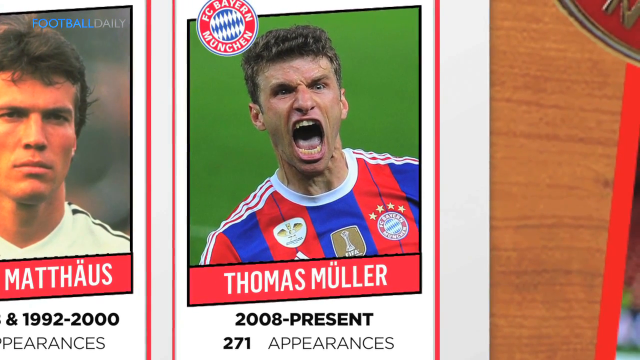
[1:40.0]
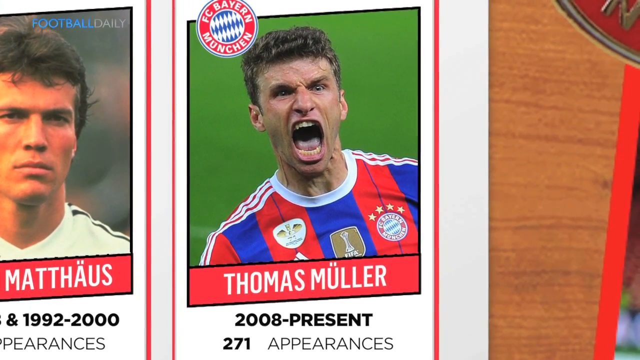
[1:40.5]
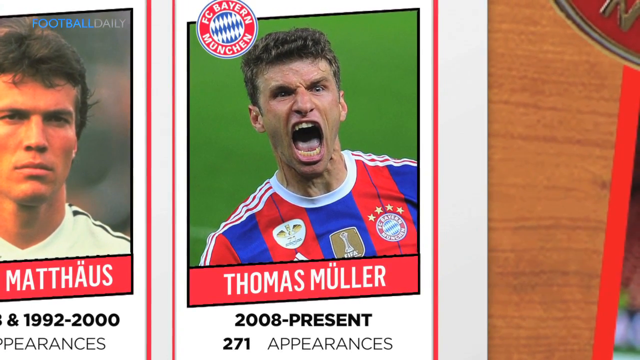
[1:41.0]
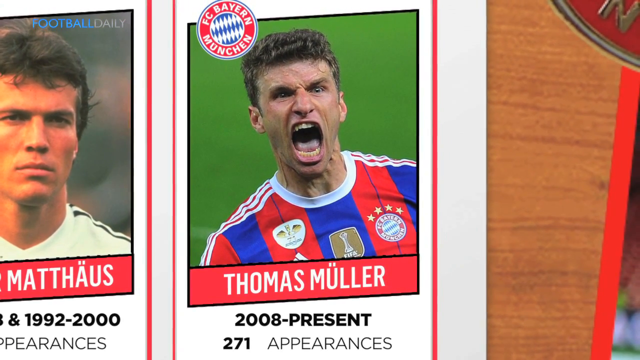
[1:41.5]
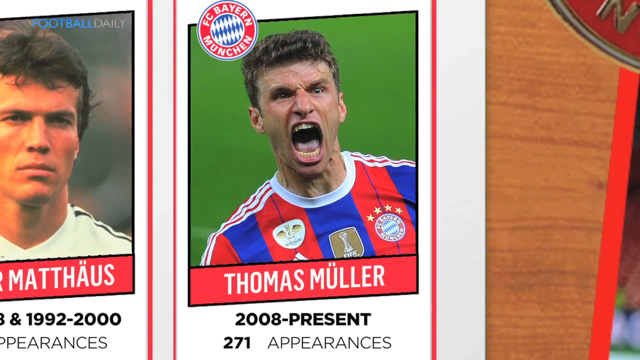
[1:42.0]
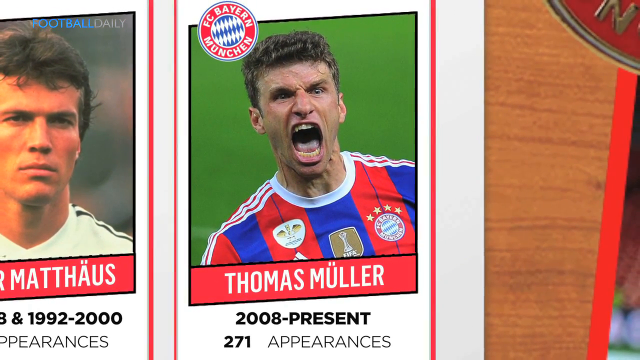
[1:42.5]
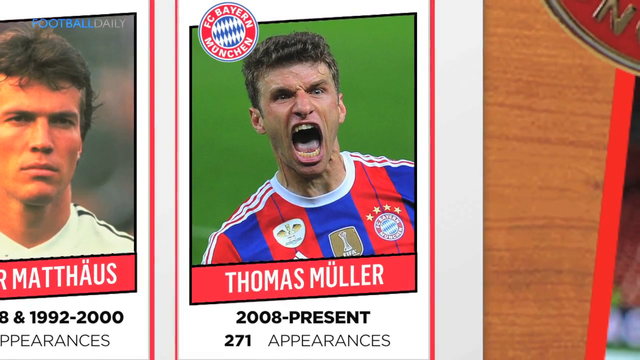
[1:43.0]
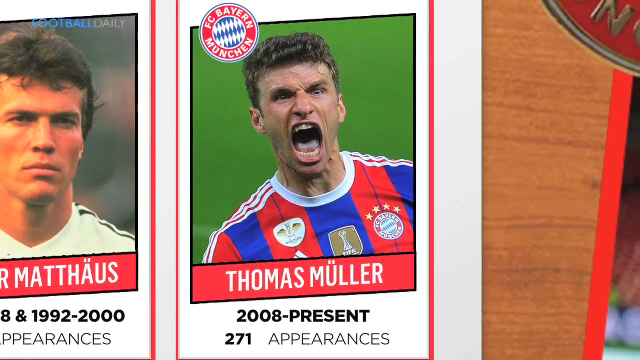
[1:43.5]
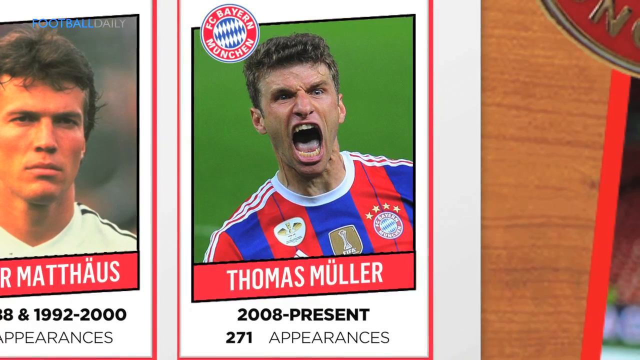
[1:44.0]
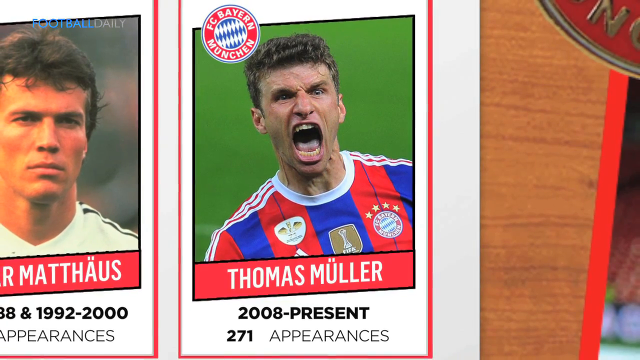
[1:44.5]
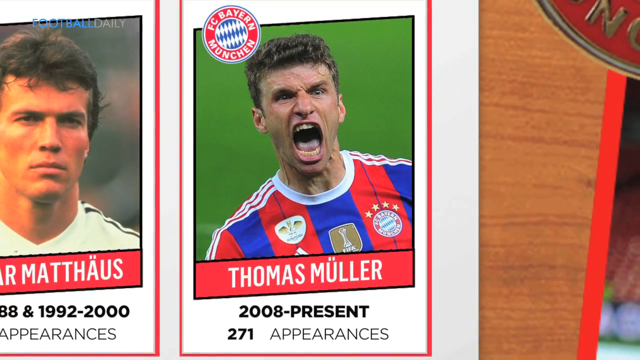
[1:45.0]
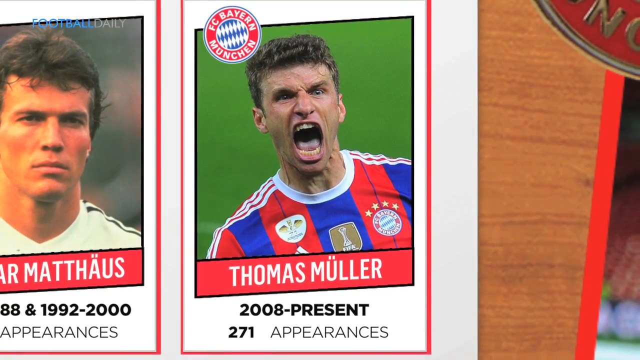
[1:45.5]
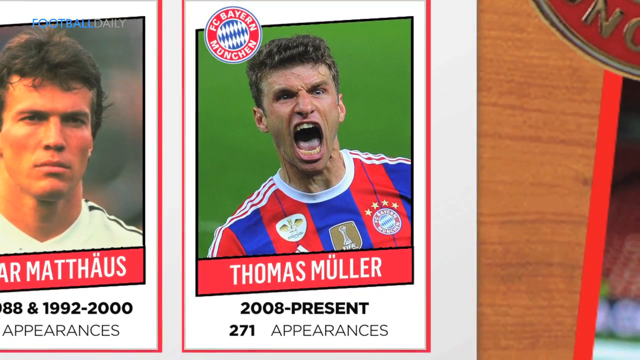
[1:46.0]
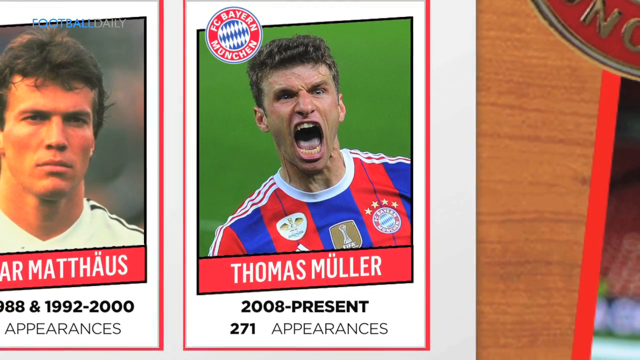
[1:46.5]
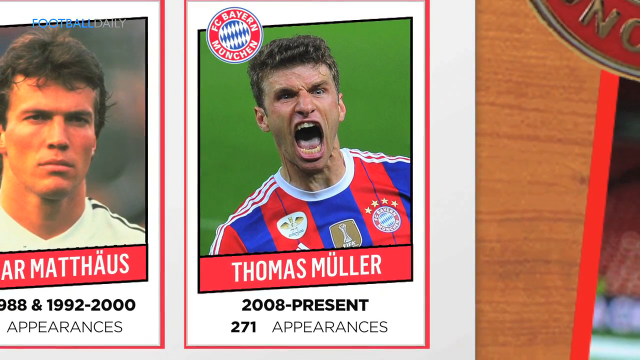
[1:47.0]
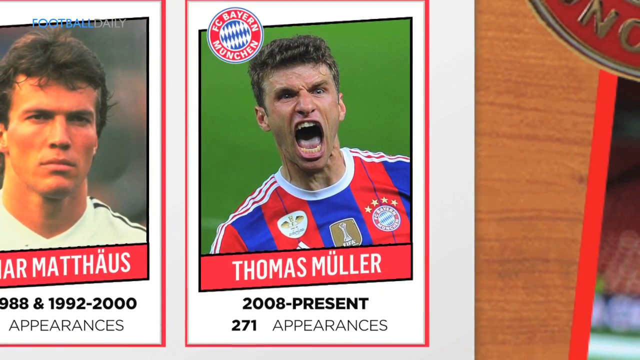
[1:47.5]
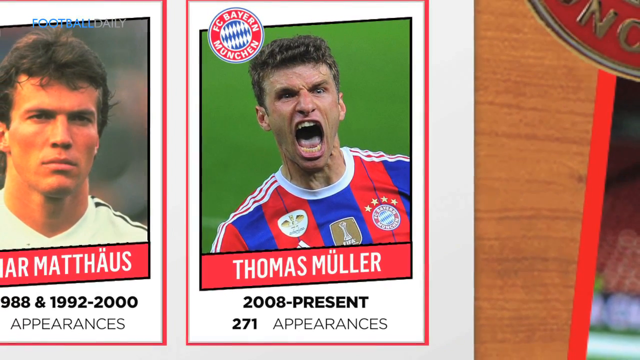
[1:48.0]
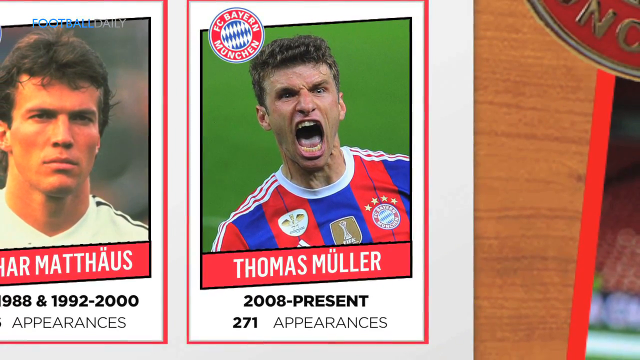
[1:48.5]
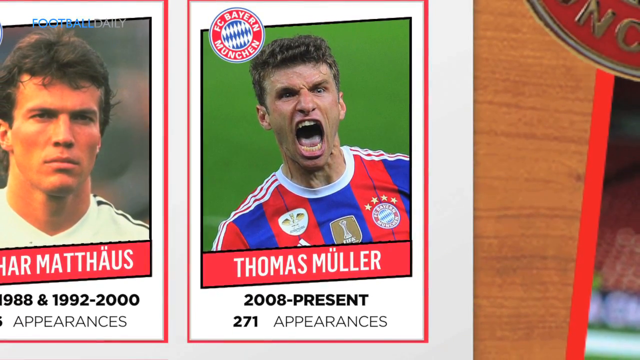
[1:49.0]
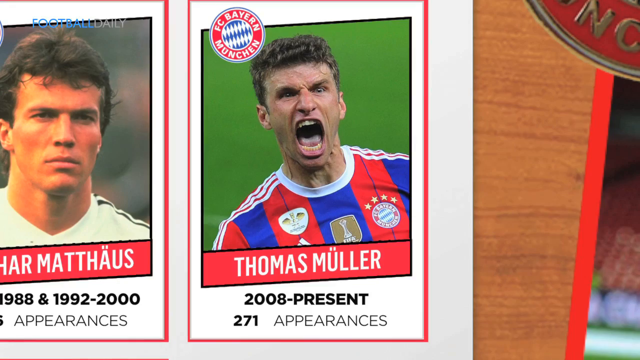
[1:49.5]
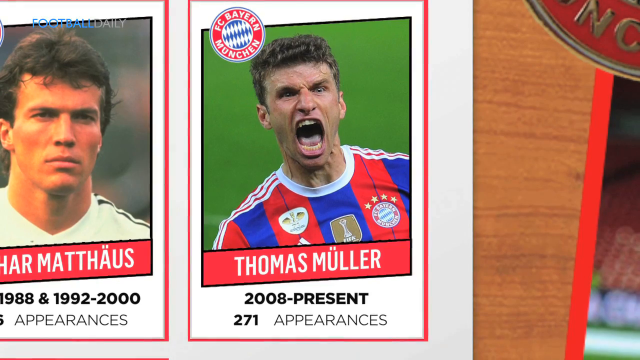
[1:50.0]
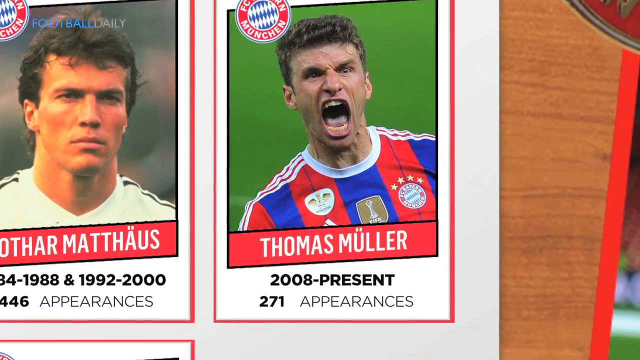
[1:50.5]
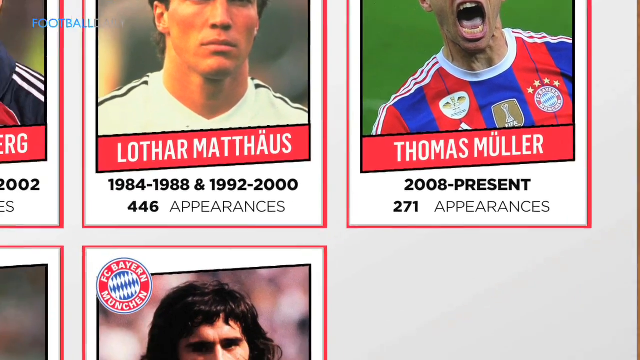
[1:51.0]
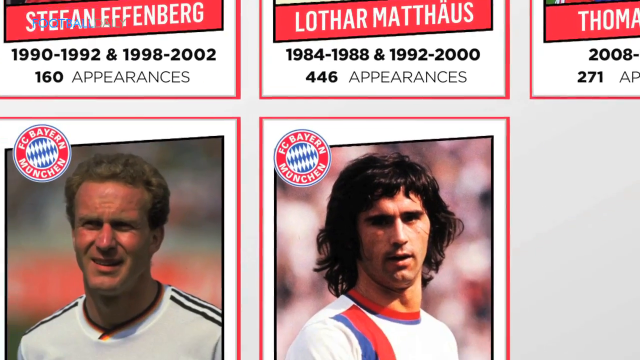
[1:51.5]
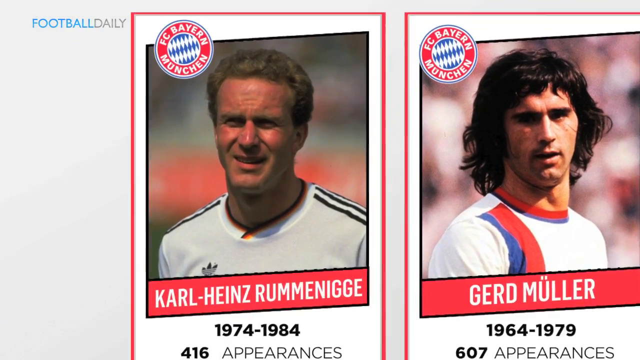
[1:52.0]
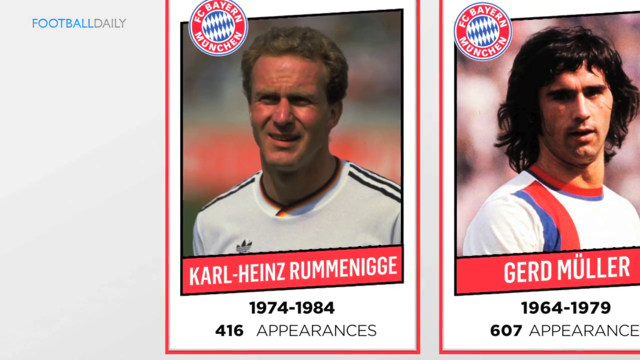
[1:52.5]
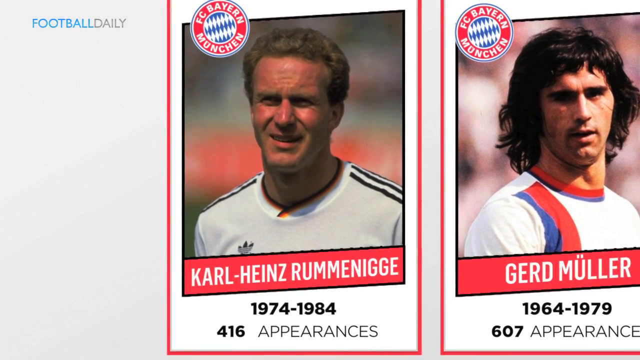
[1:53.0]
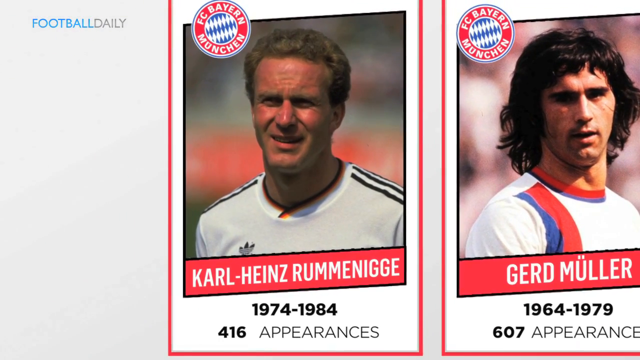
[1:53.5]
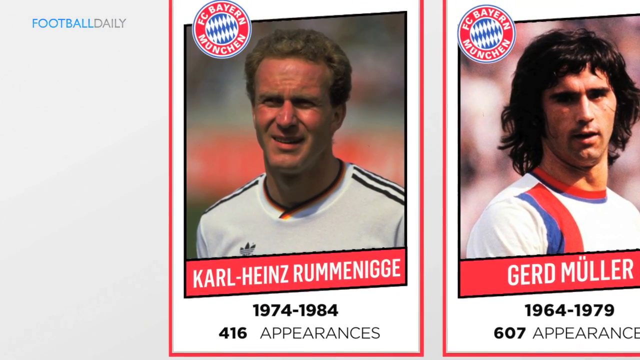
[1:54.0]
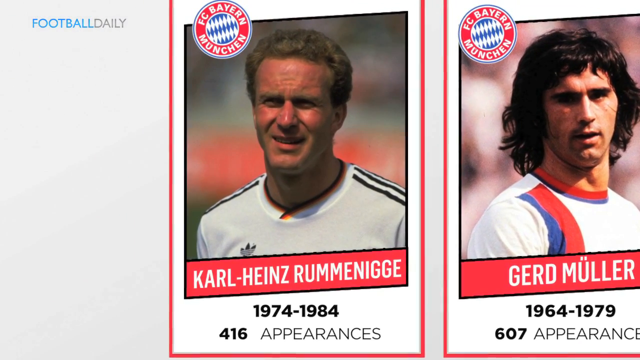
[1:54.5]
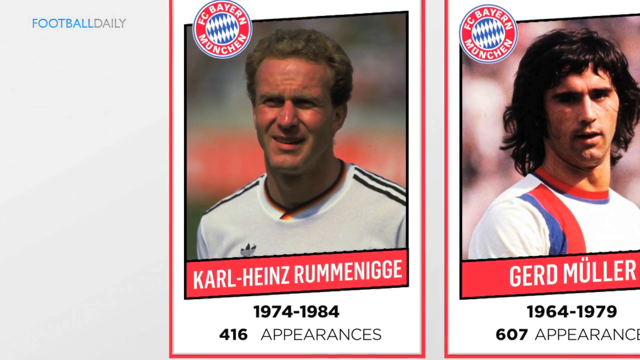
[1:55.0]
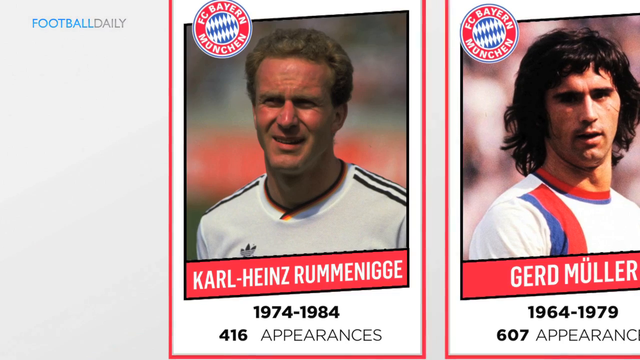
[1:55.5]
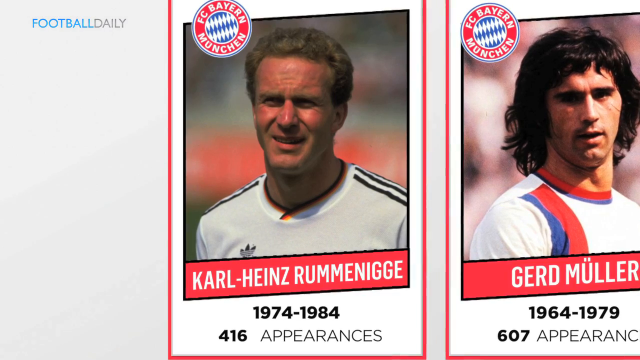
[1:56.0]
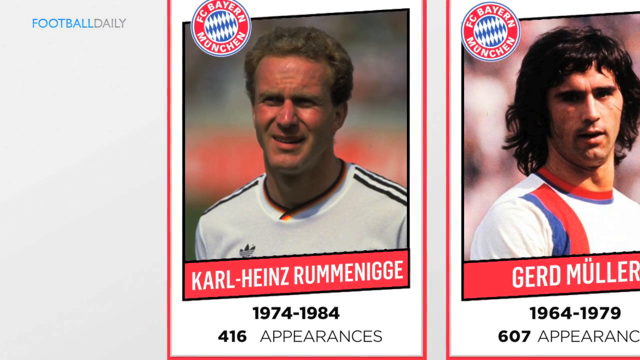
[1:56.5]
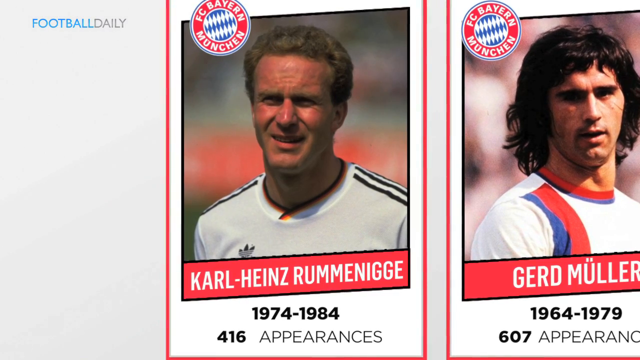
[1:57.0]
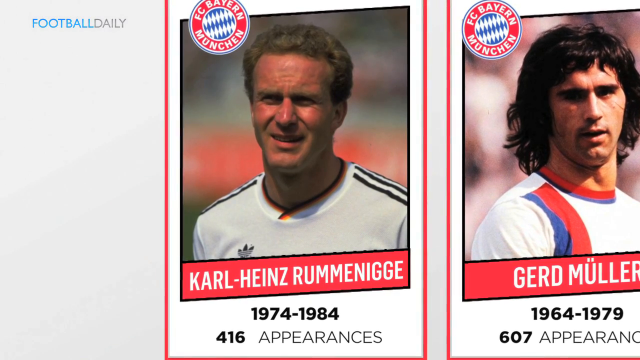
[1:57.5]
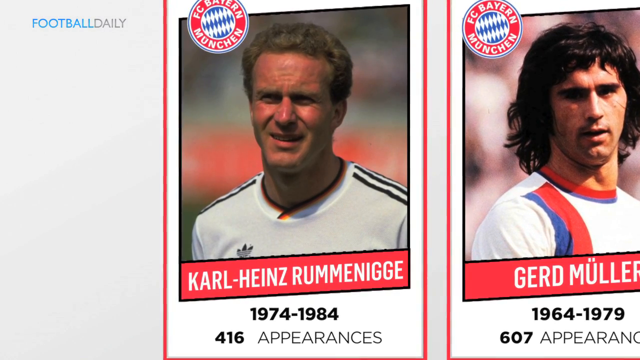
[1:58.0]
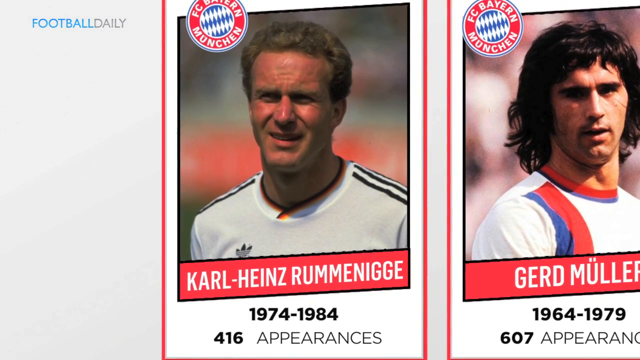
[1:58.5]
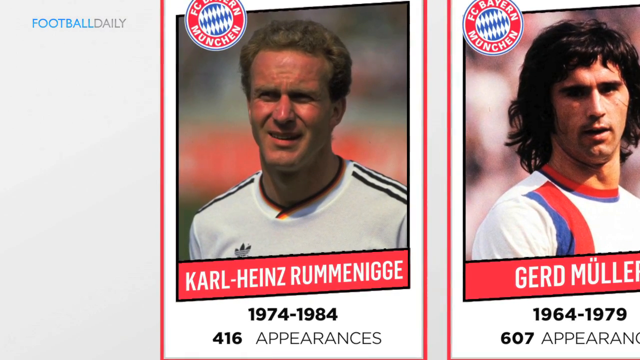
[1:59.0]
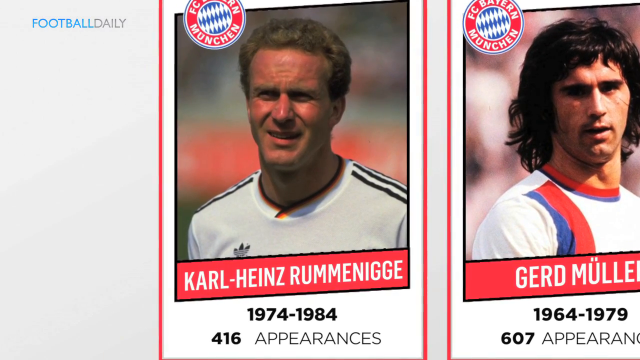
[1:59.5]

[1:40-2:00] The view begins on "THOMAS MÜLLER", then moves to the last row, starting with "KARL-HEINZ RUMMENIGGE", "1974-1984", "416 appearances". Next is "GERD MÜLLER", "1964-1979", "607 appearances". As with the other rows, the view slowly zooms in on each player, zooms out, and zooms in on the next one. This last row has half as many players as the rows above it: those rows have four players, except the top one with only one, while the bottom row has two.